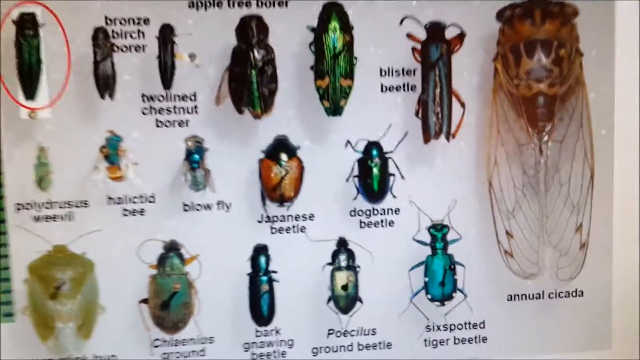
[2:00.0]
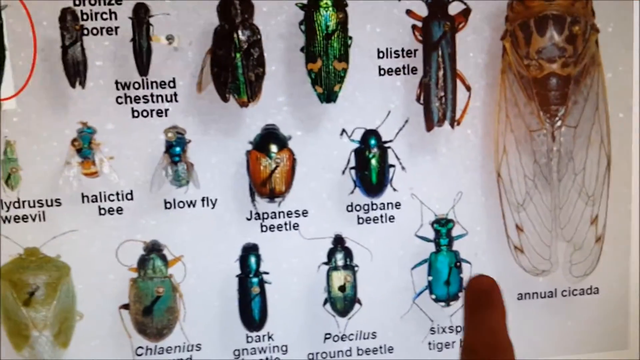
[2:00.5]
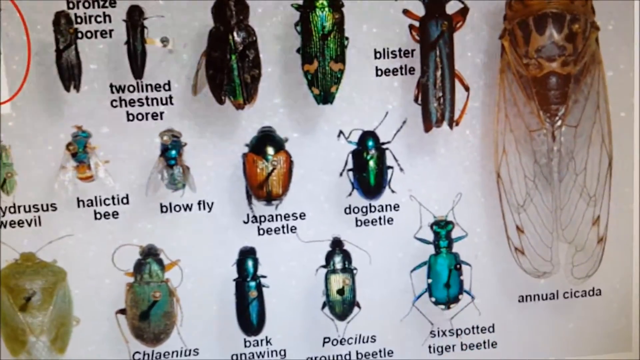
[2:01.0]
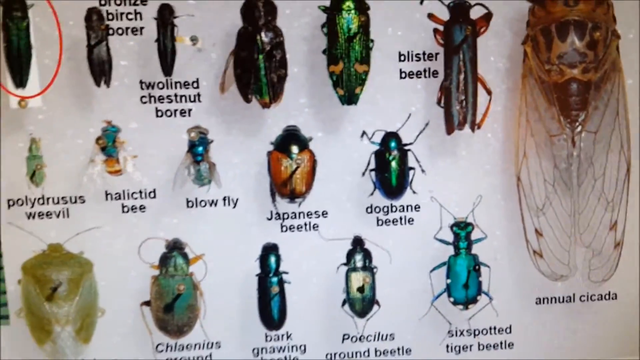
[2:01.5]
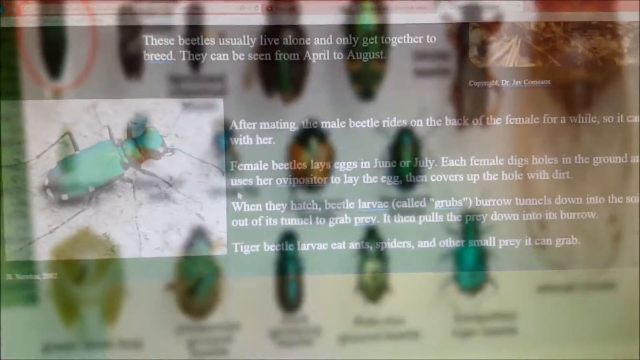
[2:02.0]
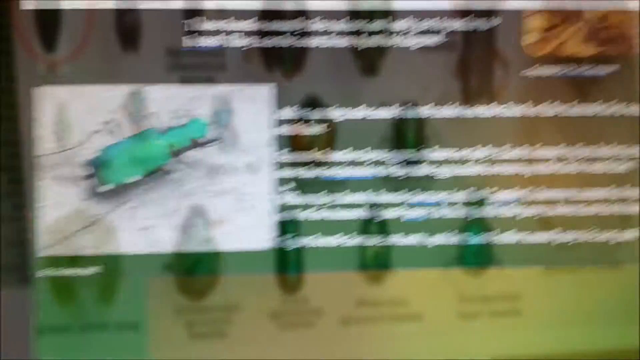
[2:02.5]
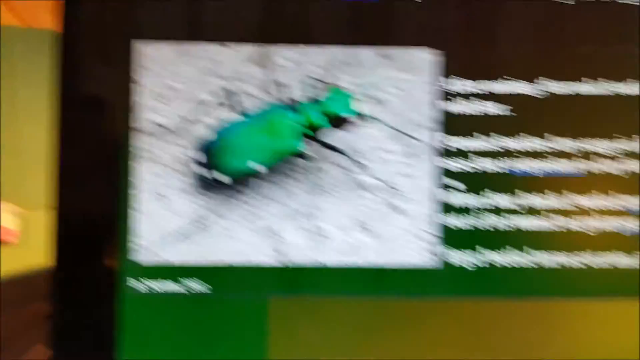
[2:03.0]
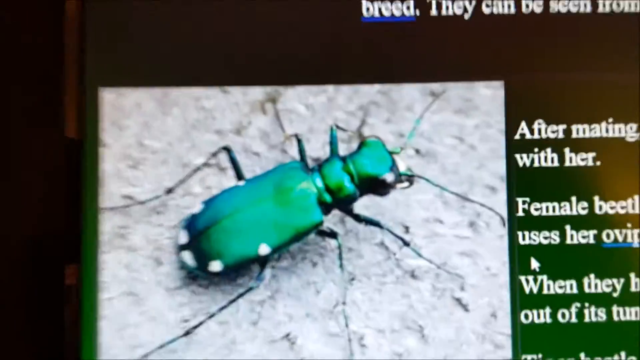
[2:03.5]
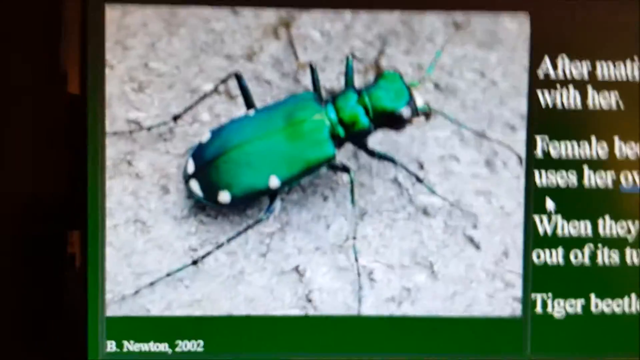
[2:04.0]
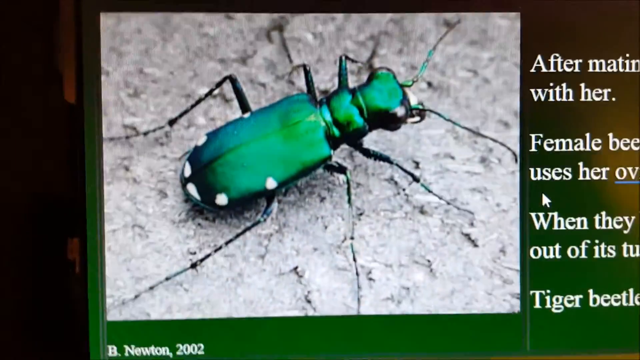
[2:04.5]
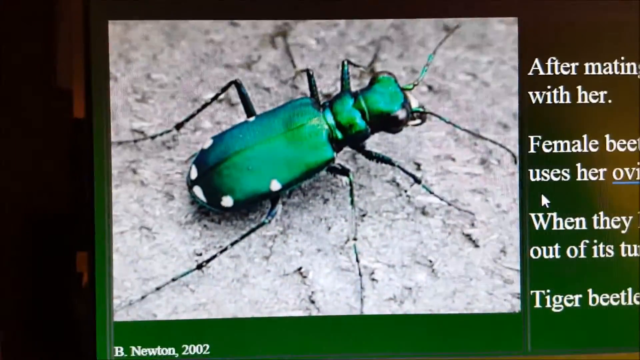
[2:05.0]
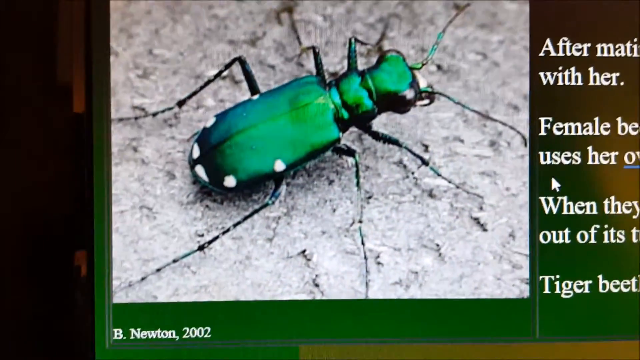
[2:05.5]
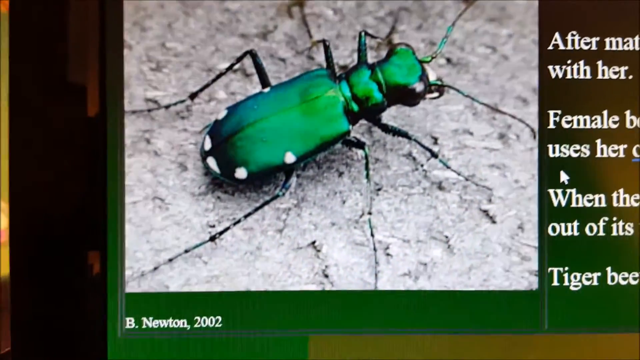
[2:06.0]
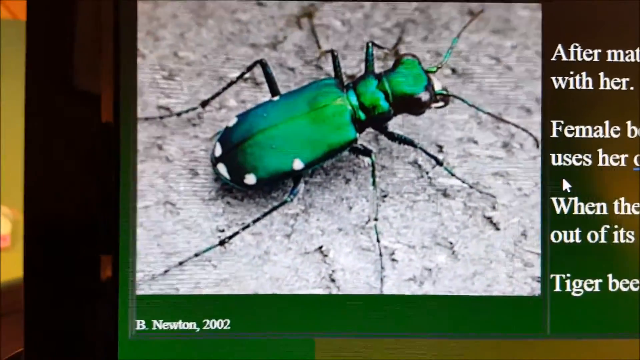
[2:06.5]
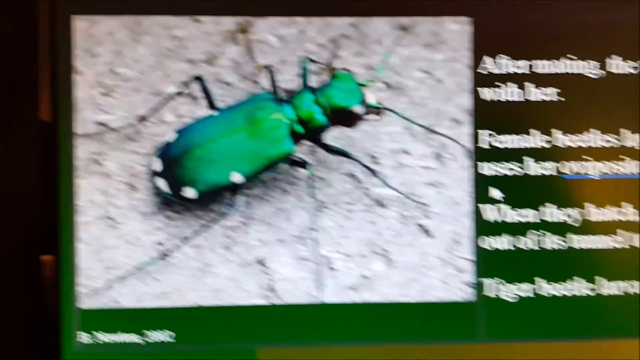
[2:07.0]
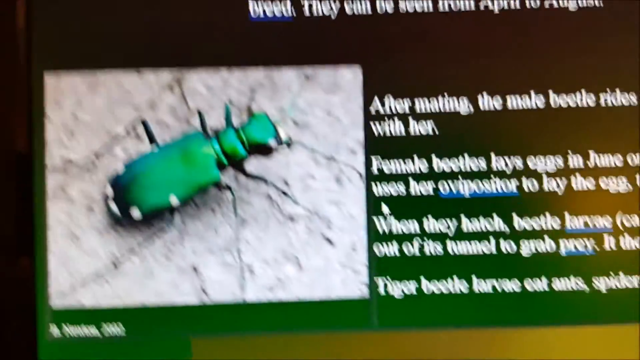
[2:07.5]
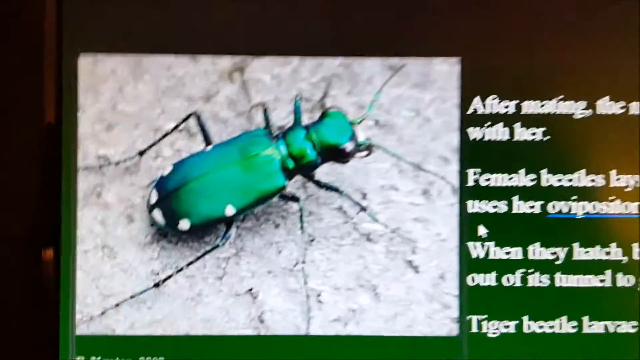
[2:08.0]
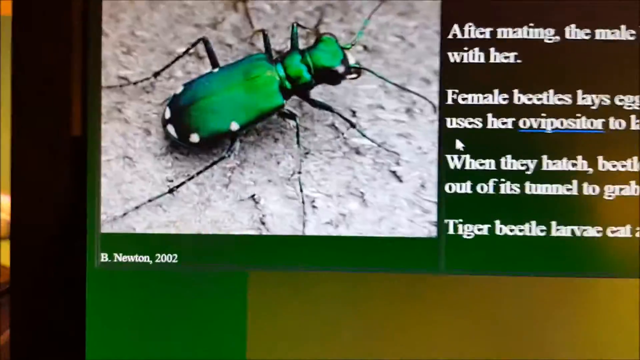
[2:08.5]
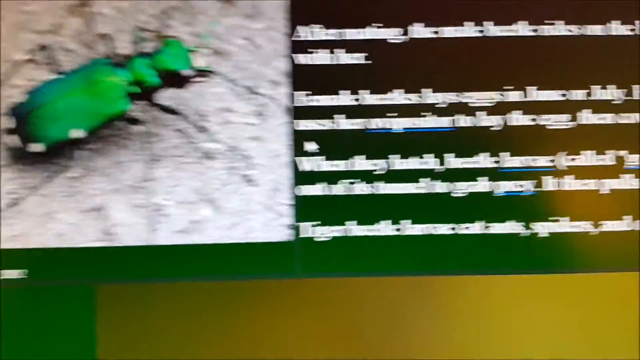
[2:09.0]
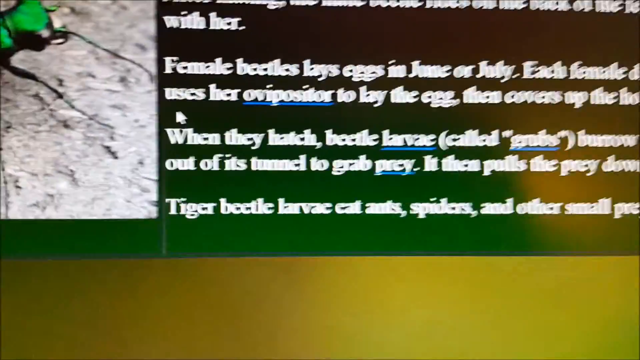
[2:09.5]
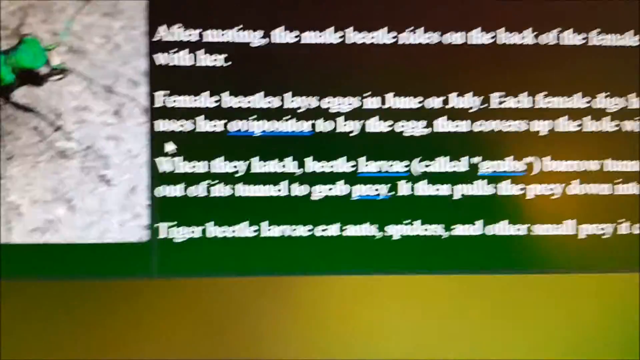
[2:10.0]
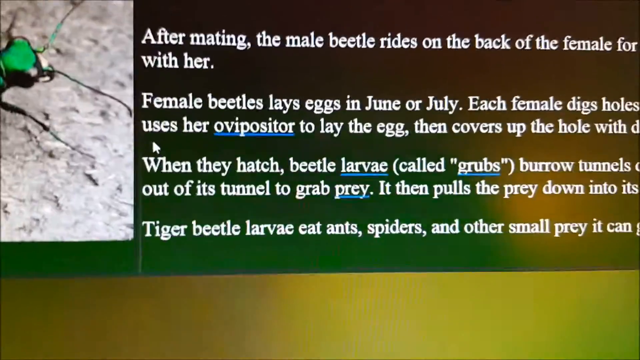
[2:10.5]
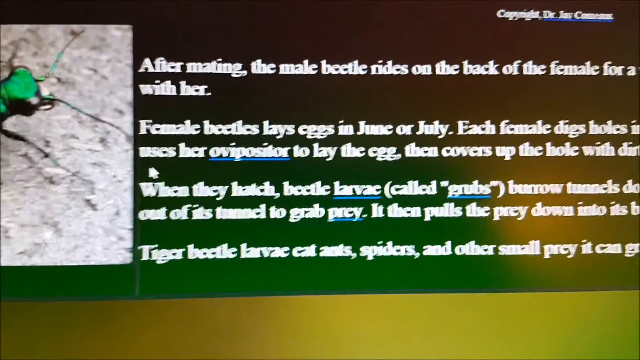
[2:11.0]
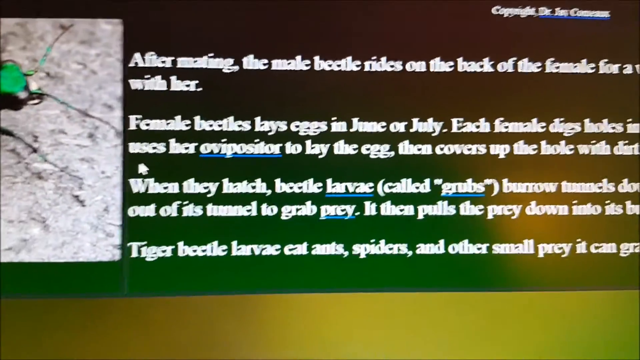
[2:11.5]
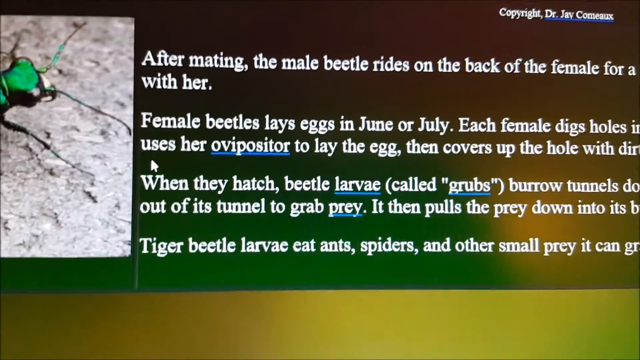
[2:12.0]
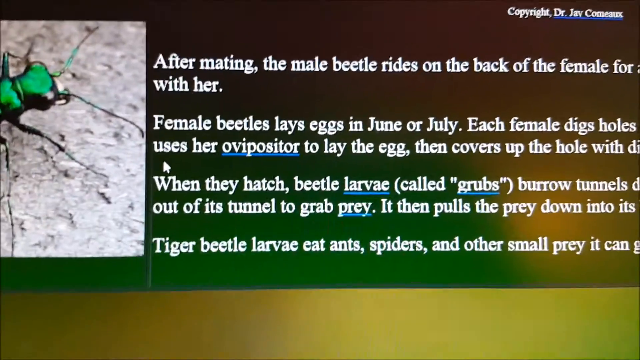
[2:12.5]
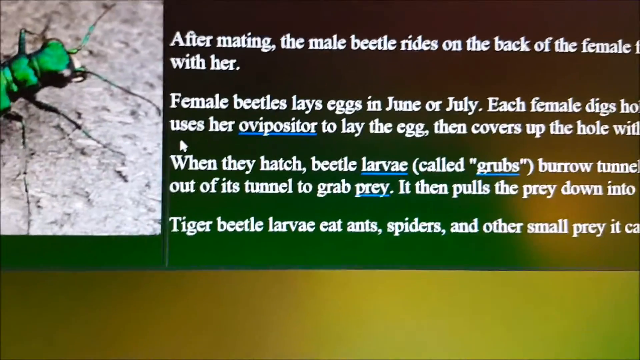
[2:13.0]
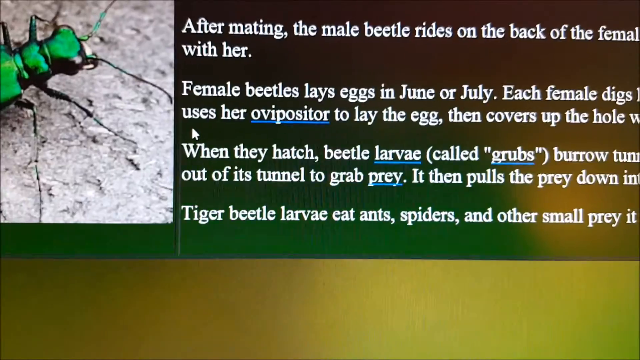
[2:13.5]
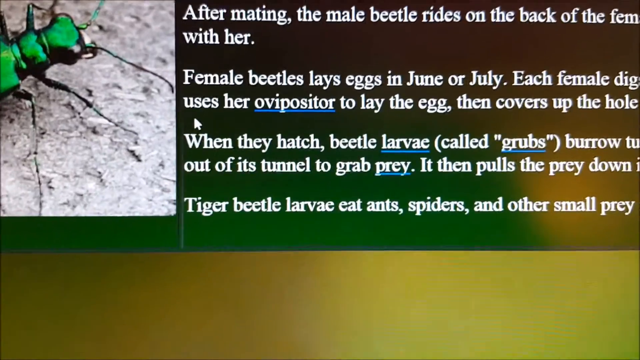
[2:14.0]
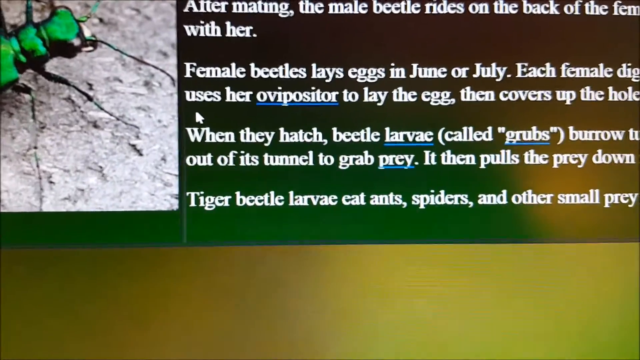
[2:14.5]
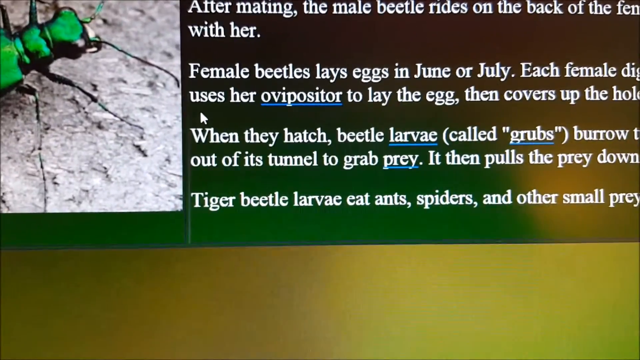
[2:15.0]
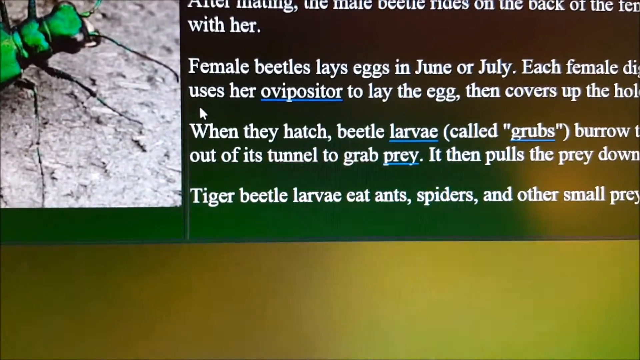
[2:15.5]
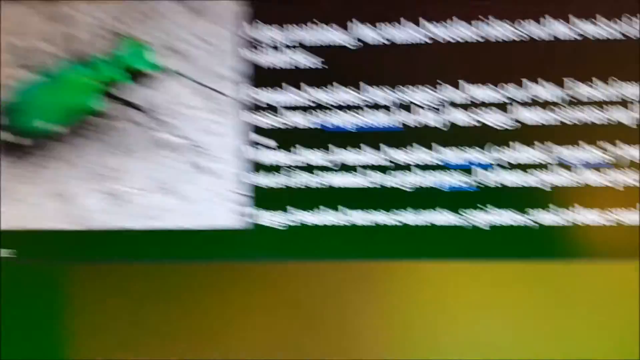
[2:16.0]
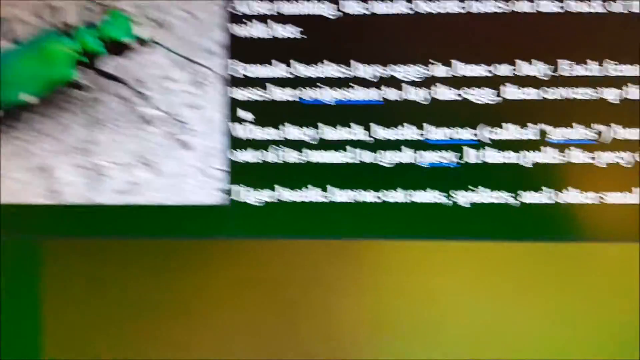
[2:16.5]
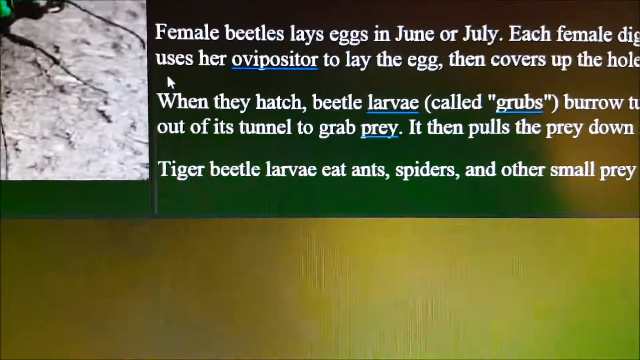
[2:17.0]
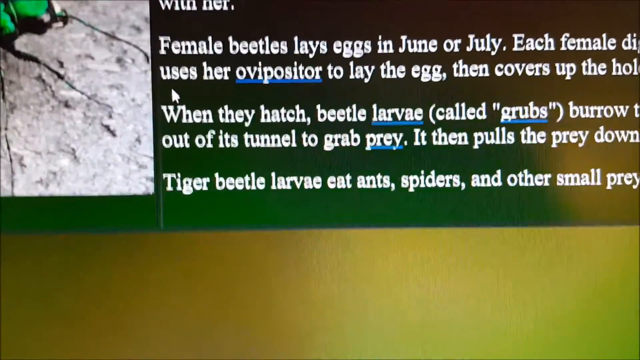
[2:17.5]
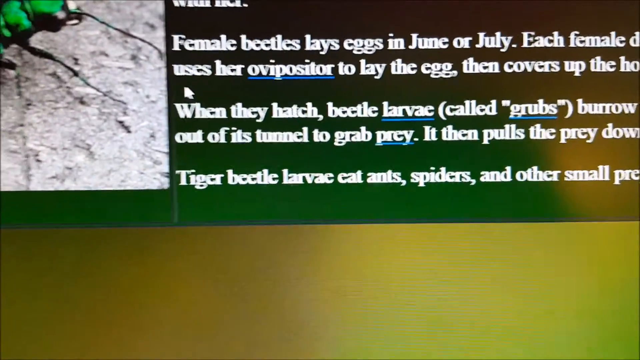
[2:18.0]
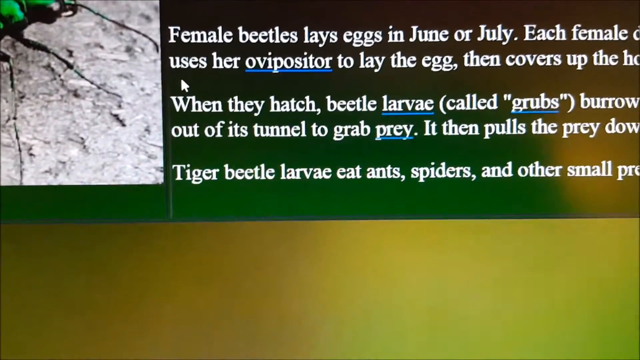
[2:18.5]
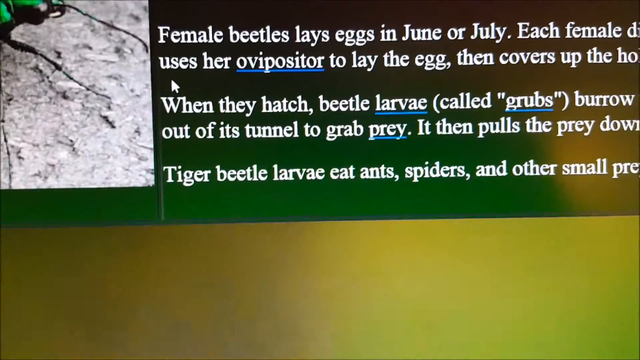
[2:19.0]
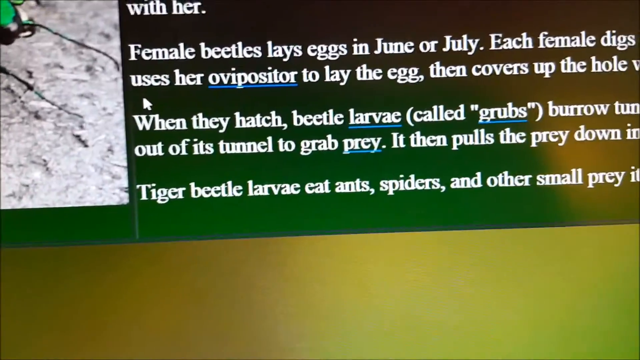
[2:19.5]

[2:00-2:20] The man points out the six-spotted tiger beetle, then a page apparently dedicated just to this beetle is brought up. It has a close-up image identical to the beetle in the plastic container, with the picture credited to B. Newton. The page seems to contain a lot of information about the beetle: this part covers how they mate, that females lay eggs in June or July, how the female lays the eggs and covers up the hole, that the hatched larvae are called grubs and burrow, and that the larvae eat spiders and other small prey they can reach. The camera zooms in on the text.